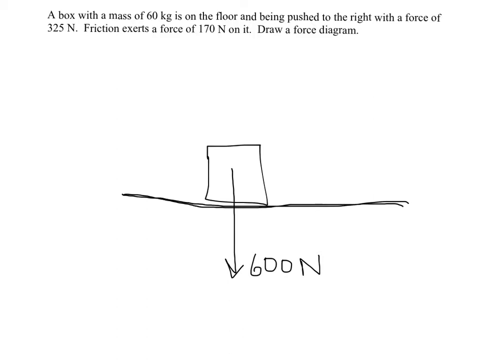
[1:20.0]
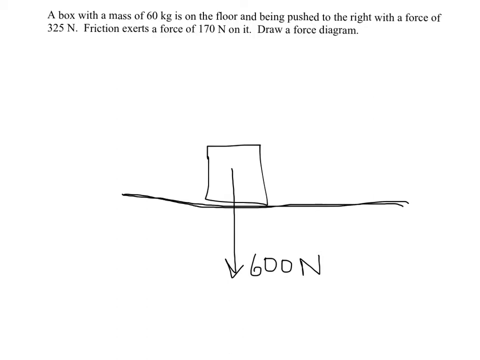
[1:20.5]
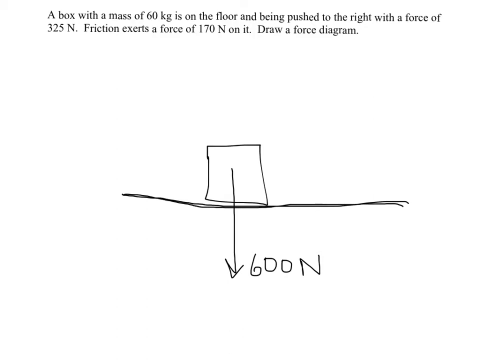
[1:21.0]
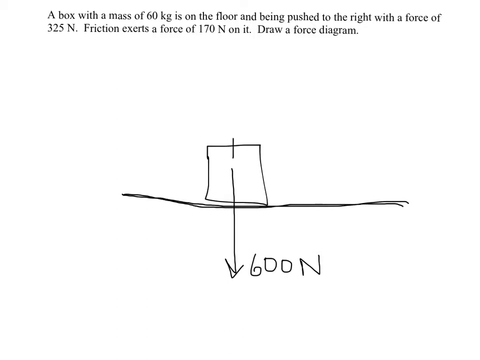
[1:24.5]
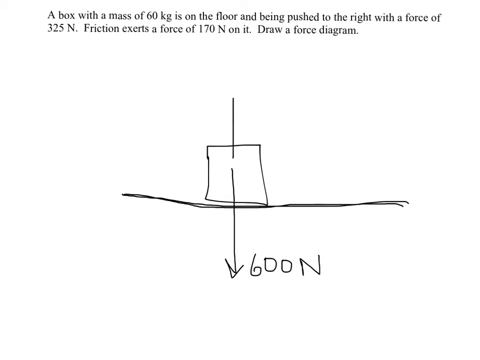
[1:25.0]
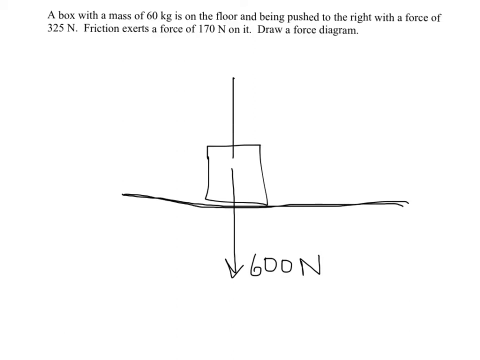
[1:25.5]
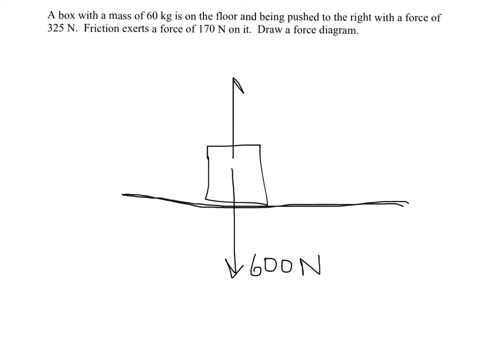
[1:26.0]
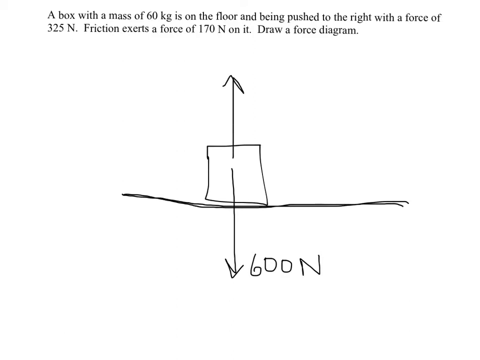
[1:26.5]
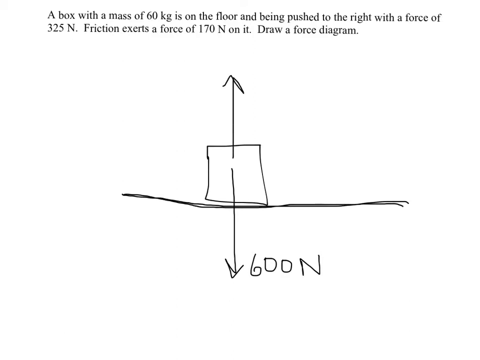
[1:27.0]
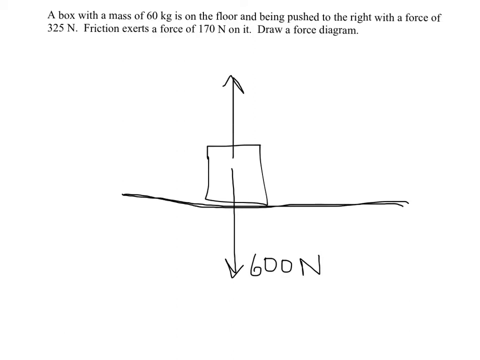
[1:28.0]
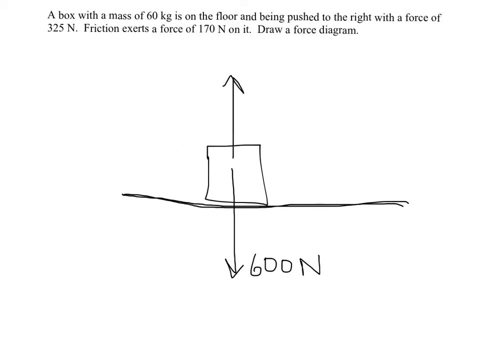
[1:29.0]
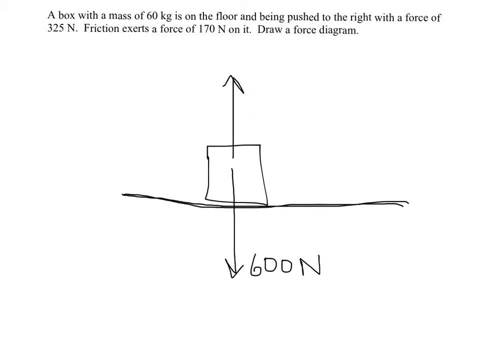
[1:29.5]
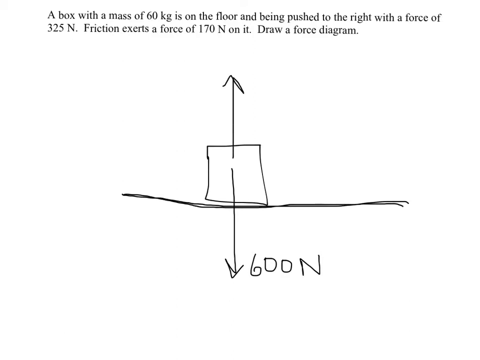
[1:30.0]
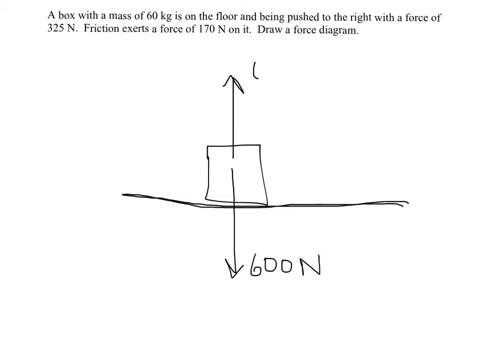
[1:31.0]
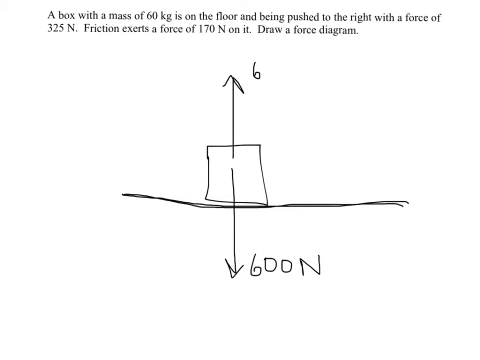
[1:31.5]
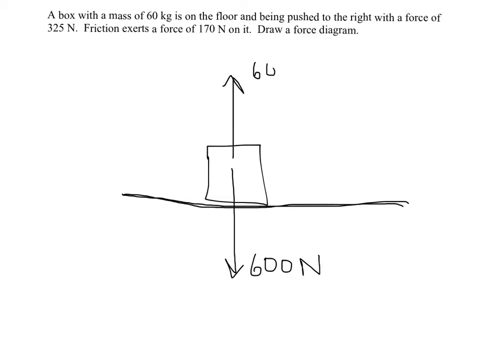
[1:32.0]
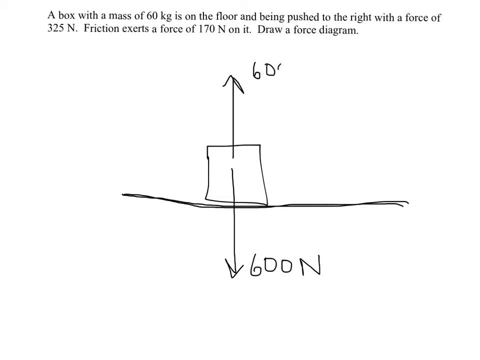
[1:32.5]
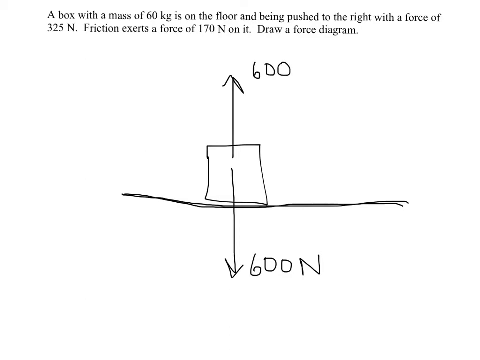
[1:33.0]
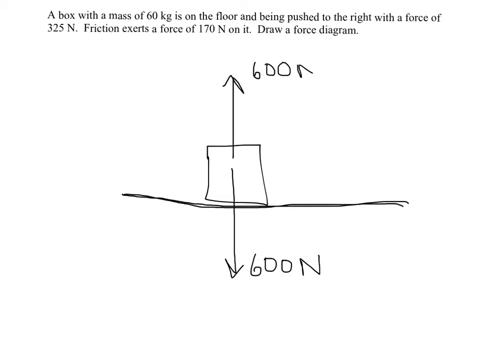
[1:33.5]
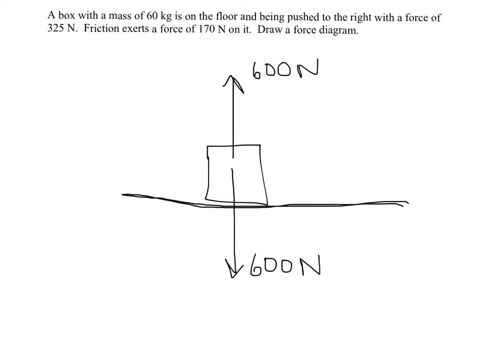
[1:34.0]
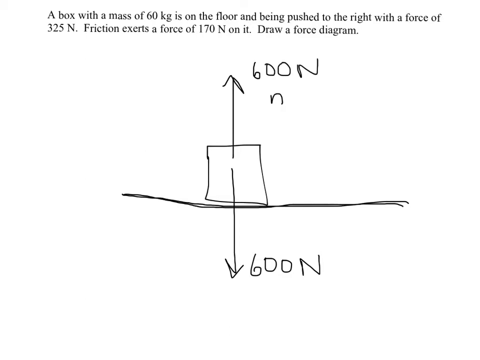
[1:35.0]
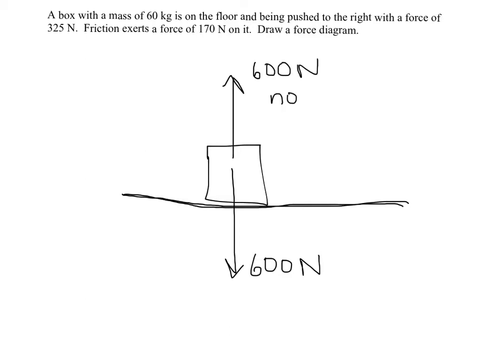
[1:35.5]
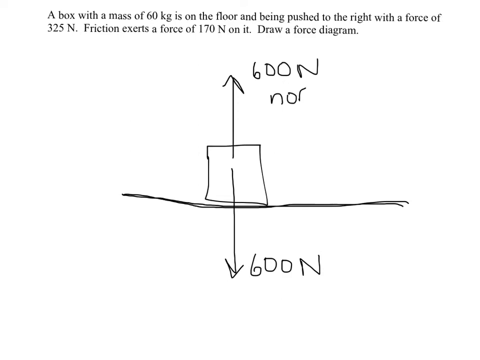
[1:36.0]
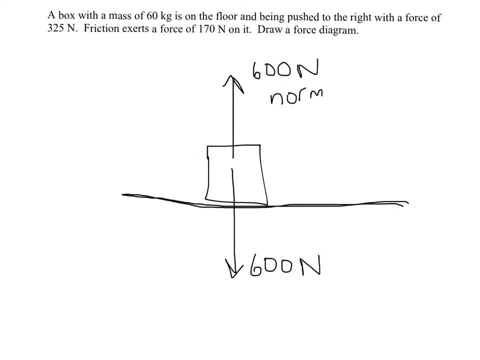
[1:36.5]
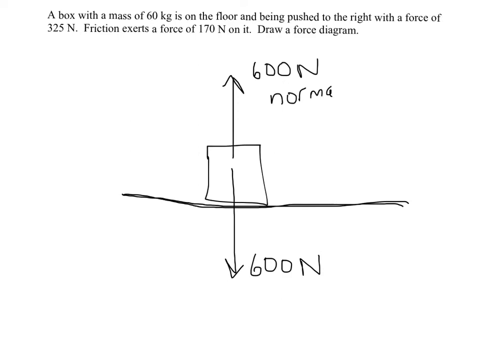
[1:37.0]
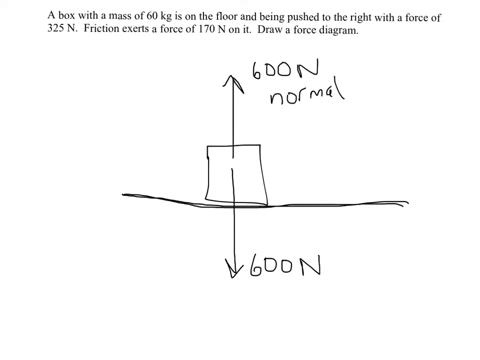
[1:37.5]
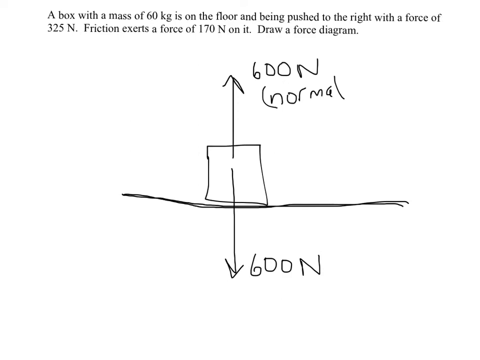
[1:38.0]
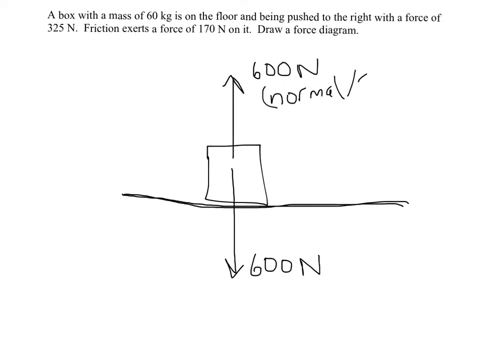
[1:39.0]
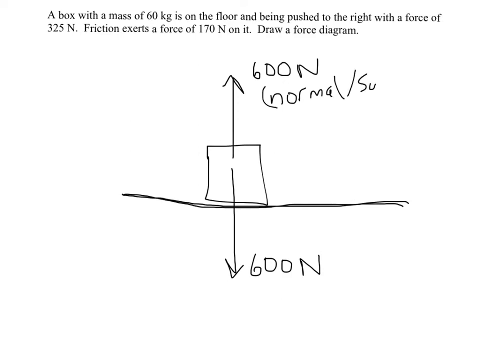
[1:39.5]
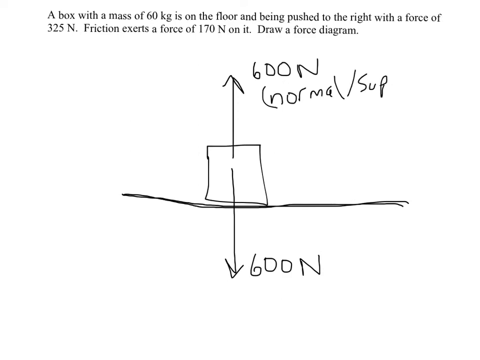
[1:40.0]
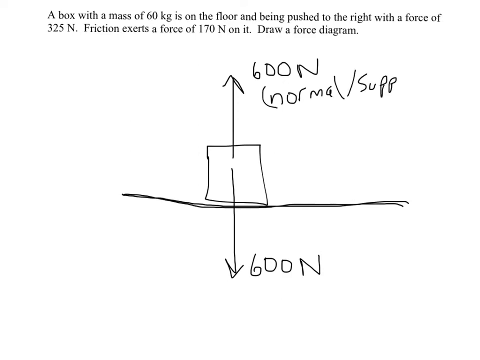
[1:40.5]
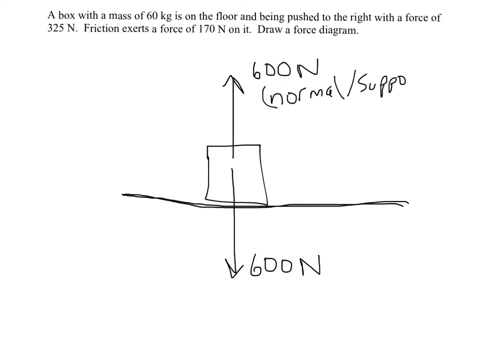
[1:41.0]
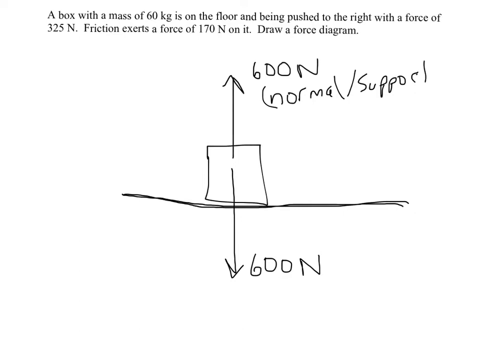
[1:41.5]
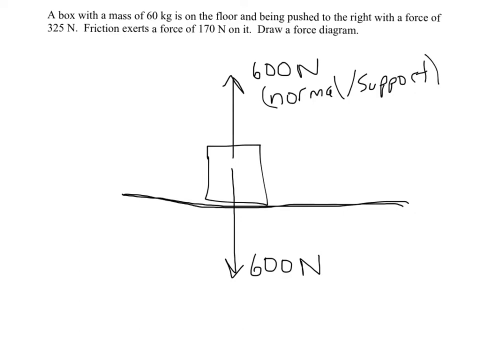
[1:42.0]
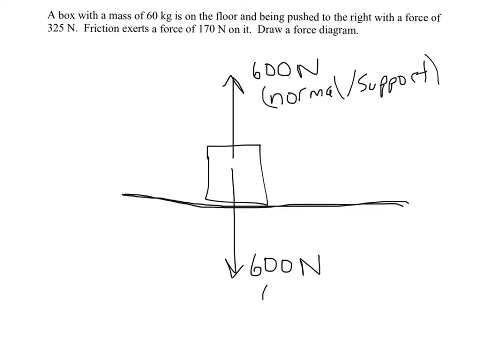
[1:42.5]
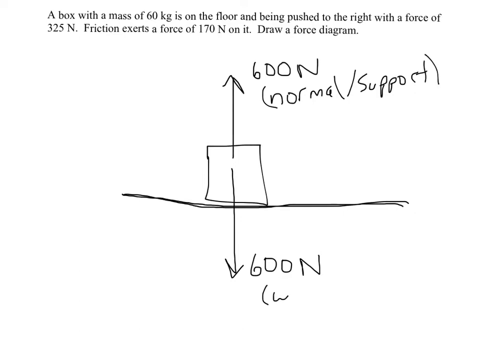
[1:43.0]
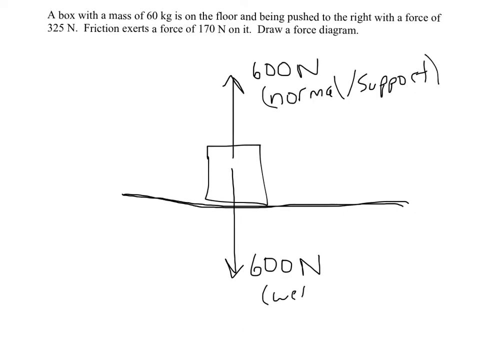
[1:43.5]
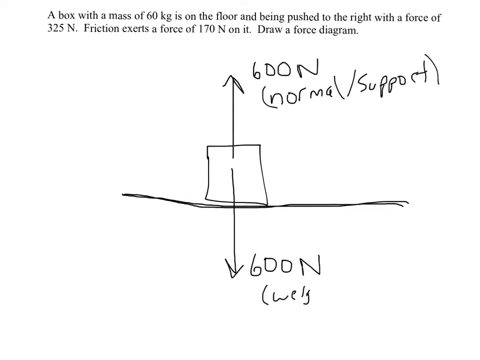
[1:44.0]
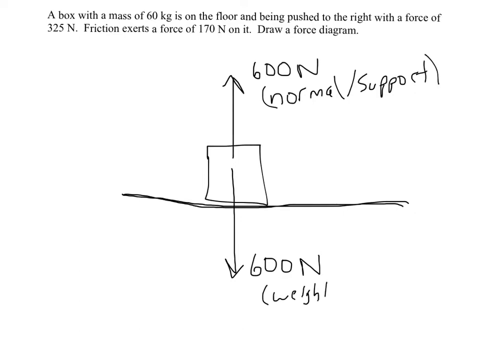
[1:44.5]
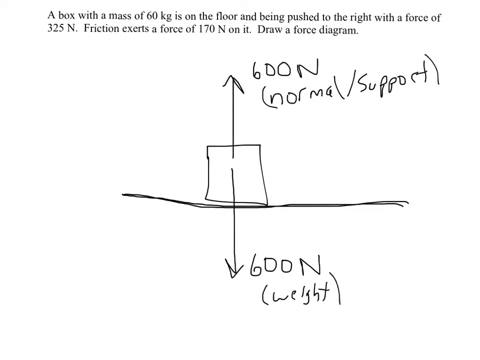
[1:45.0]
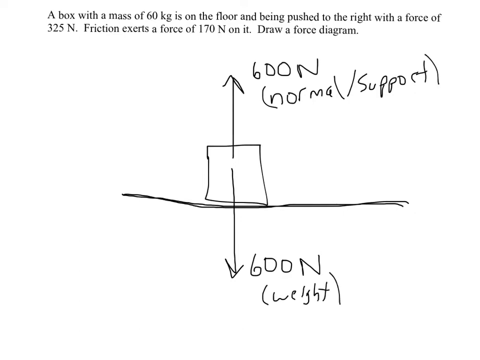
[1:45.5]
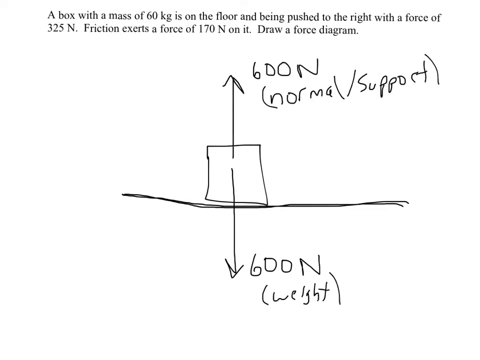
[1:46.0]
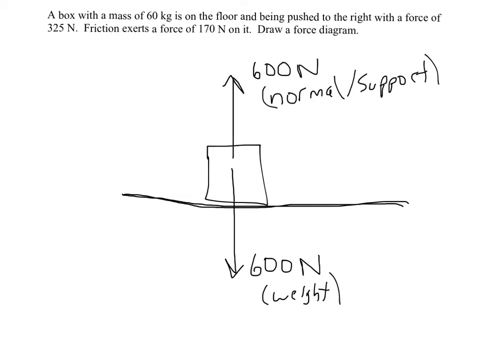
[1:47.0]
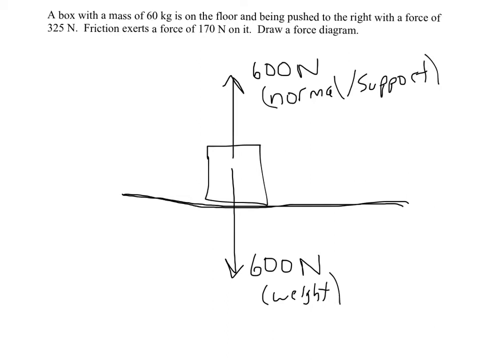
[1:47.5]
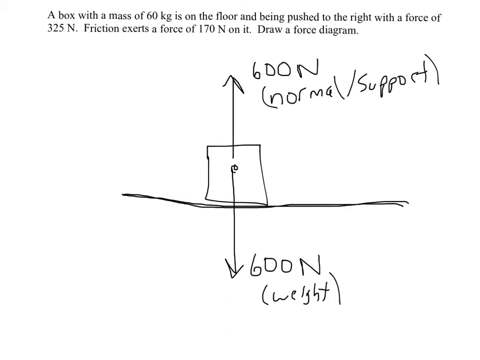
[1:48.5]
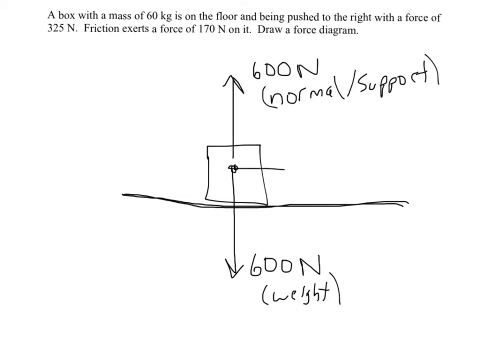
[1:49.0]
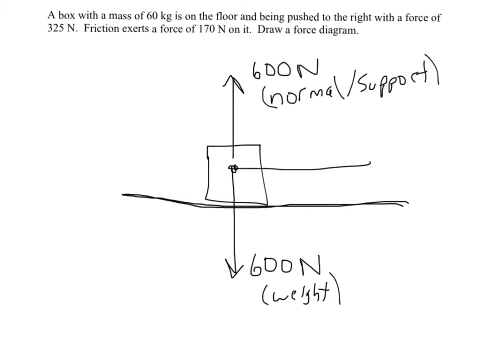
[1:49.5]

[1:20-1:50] The rectangular sketch has a downward arrow of 600 newtons, with a line separating the arrow from the figure. Another arrow points upwards from the rectangular figure, also labeled 600 newtons, and the person, writing by hand with a pen, adds a bracketed label that includes the words "normal" and "support". On the downward 600 newton force the person writes "weight". The person then draws another arrow from the rectangular sketch pointing to the right.